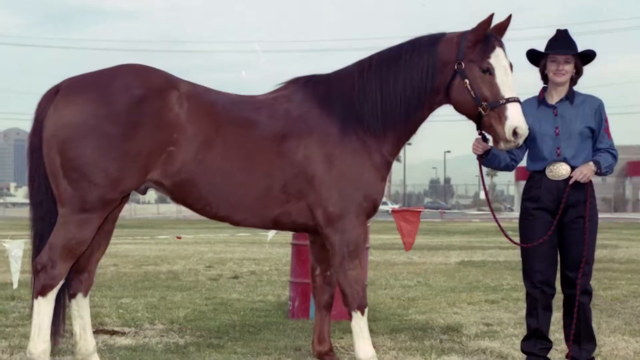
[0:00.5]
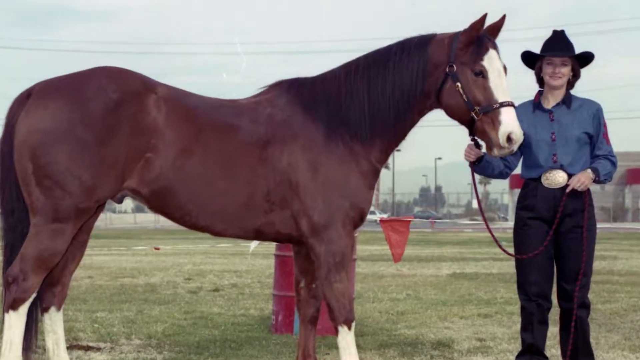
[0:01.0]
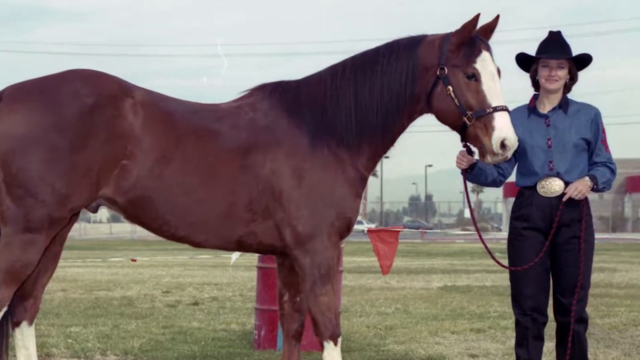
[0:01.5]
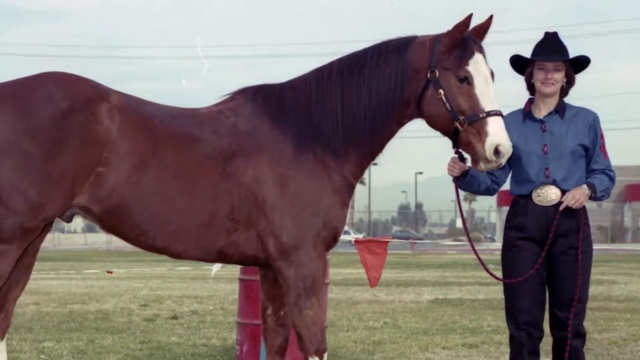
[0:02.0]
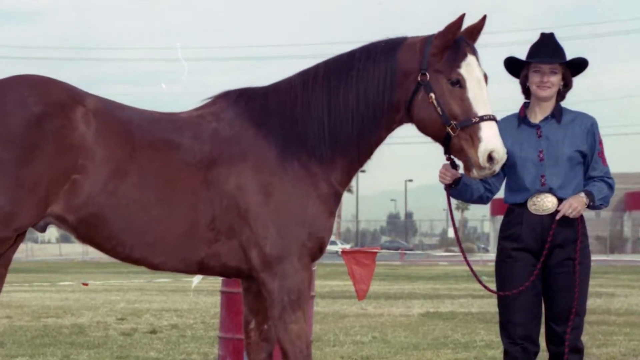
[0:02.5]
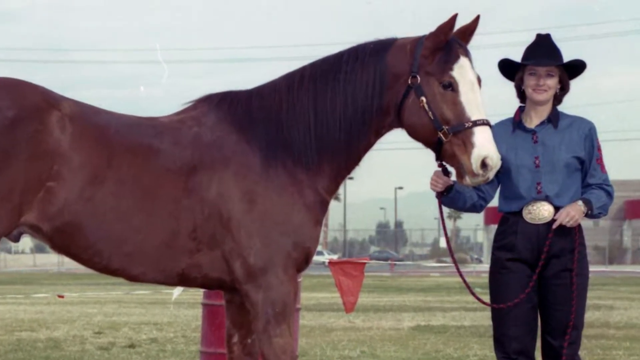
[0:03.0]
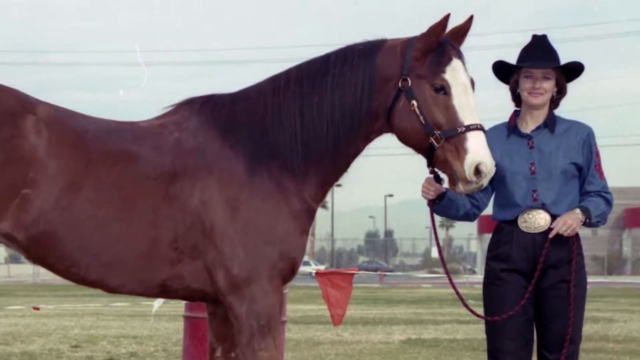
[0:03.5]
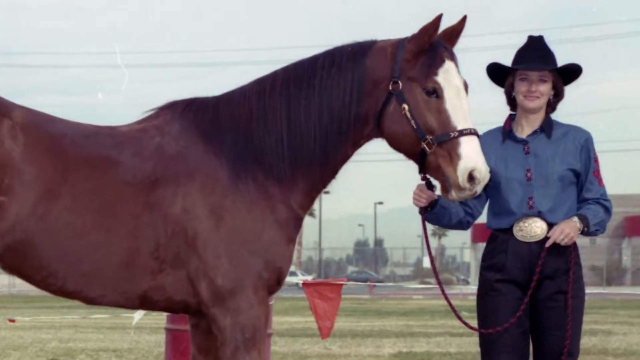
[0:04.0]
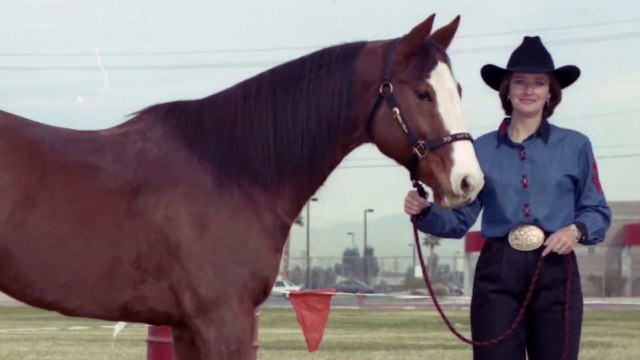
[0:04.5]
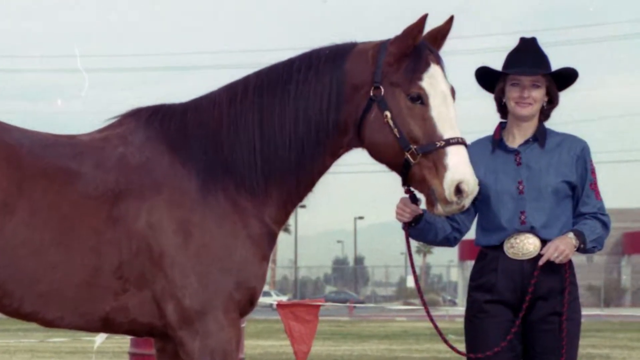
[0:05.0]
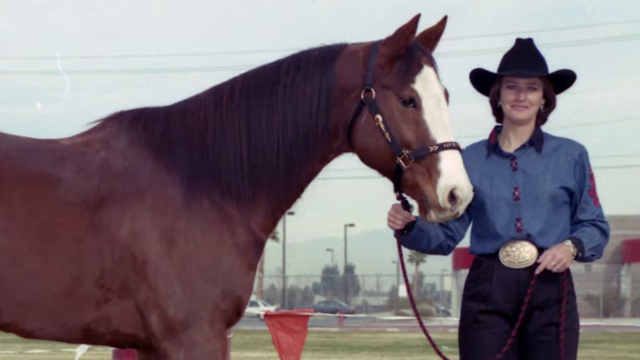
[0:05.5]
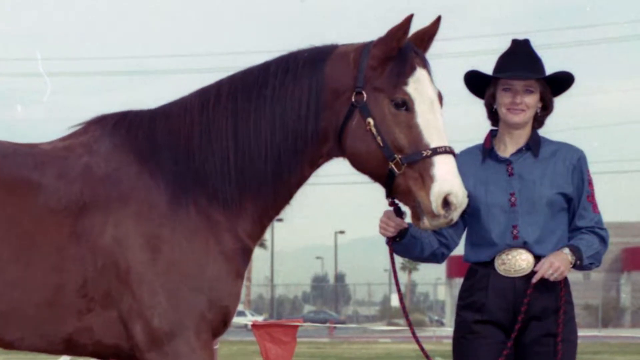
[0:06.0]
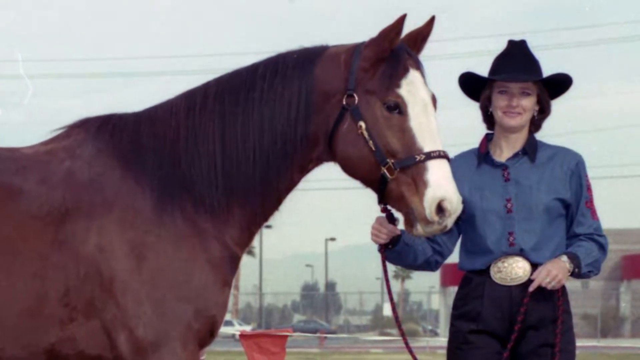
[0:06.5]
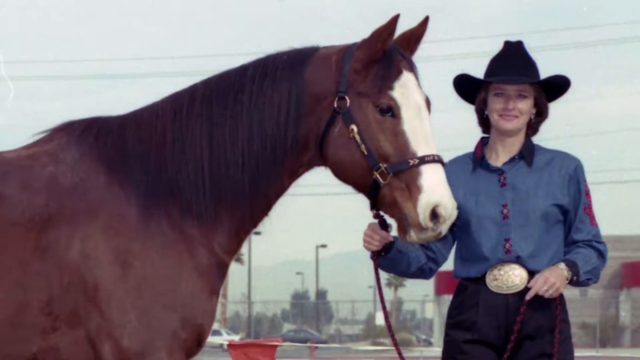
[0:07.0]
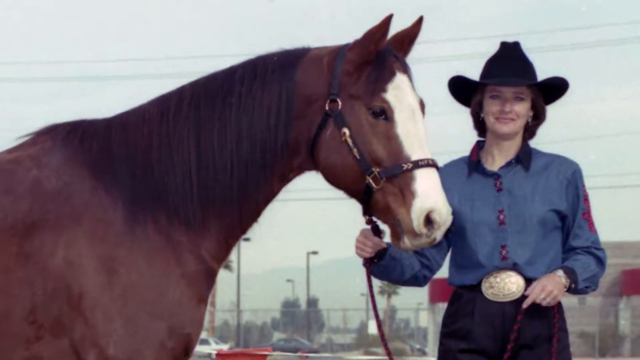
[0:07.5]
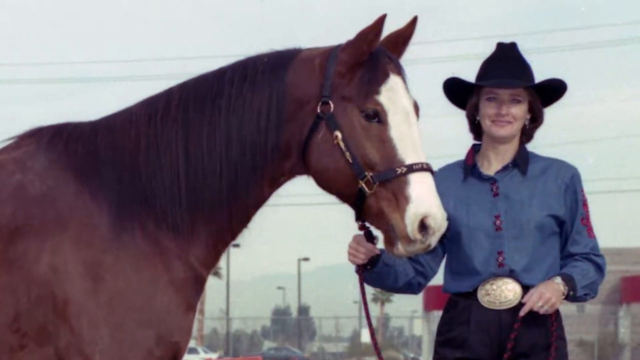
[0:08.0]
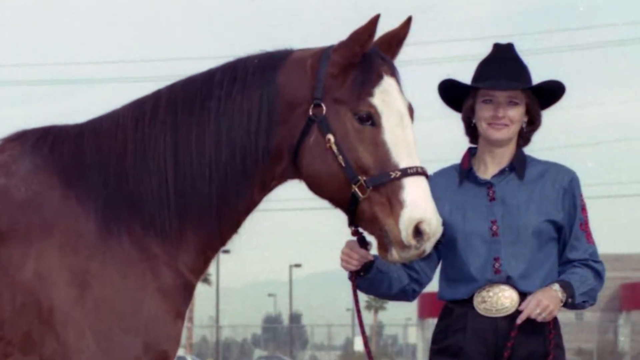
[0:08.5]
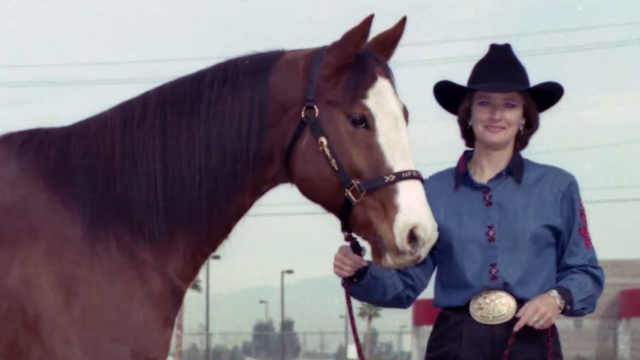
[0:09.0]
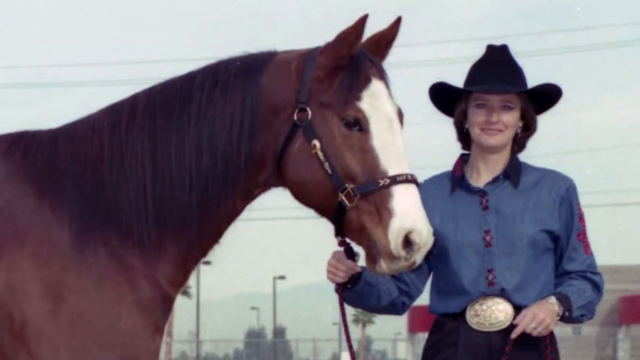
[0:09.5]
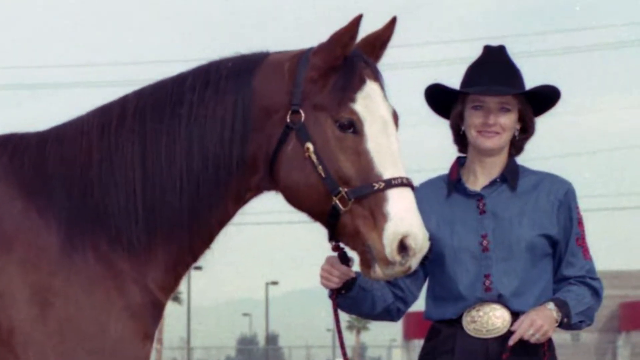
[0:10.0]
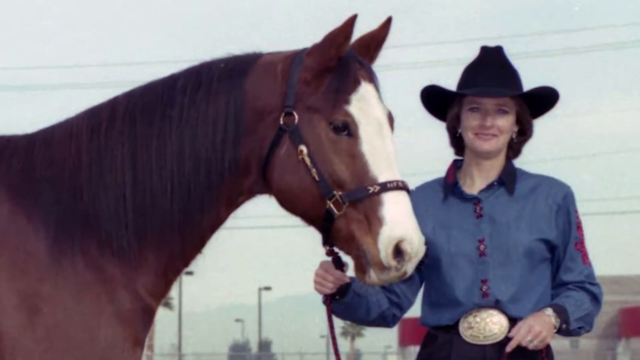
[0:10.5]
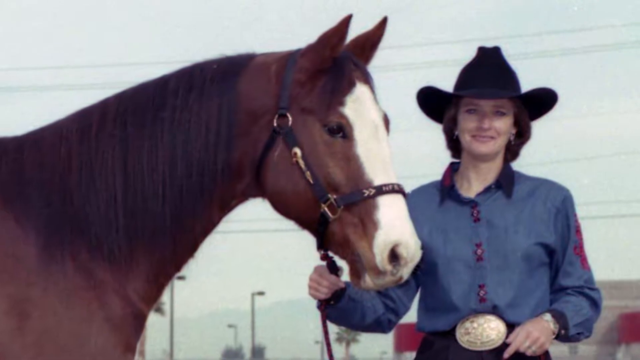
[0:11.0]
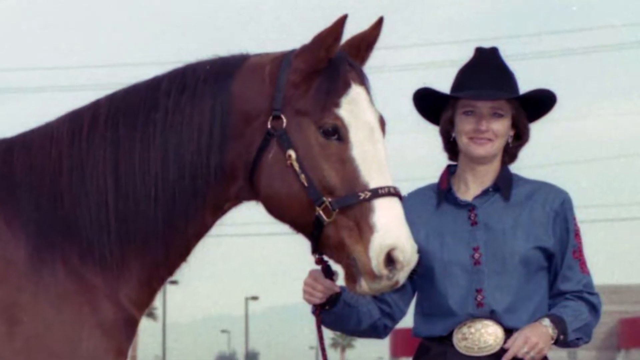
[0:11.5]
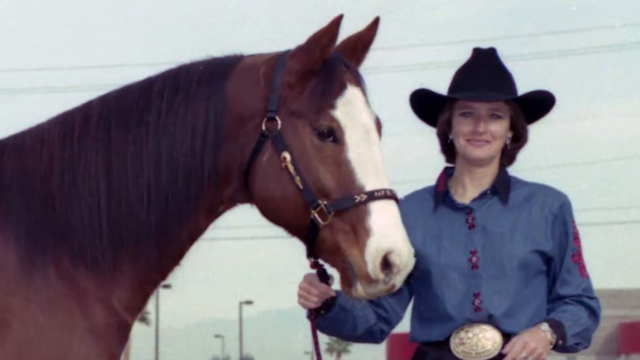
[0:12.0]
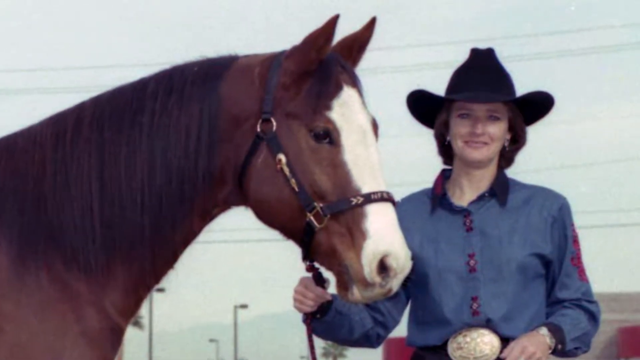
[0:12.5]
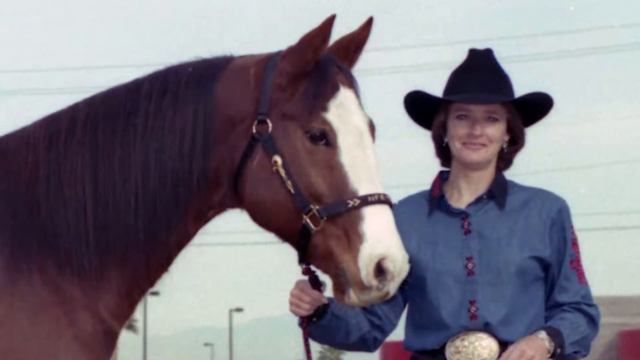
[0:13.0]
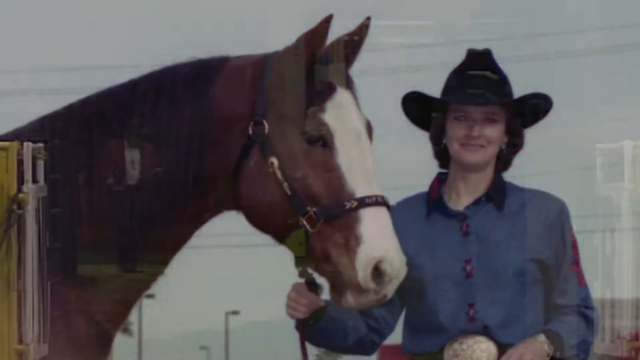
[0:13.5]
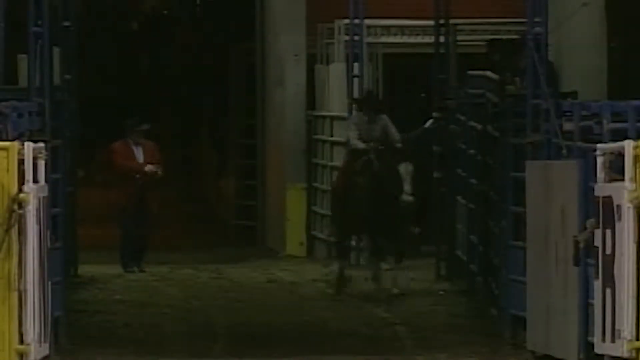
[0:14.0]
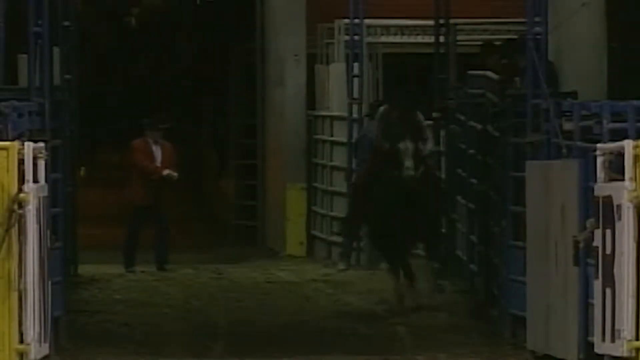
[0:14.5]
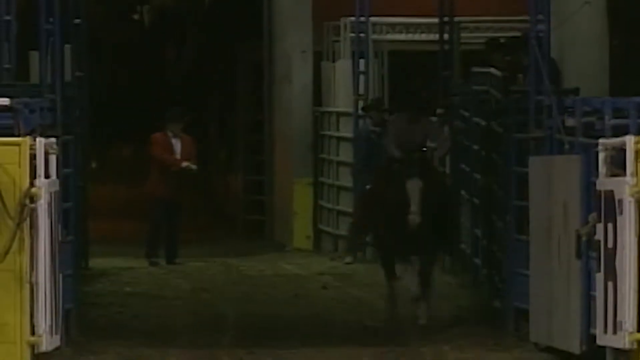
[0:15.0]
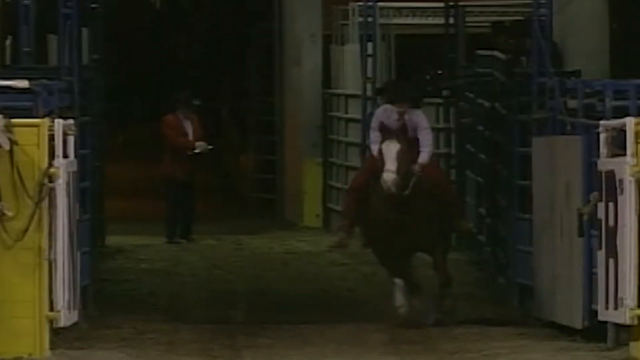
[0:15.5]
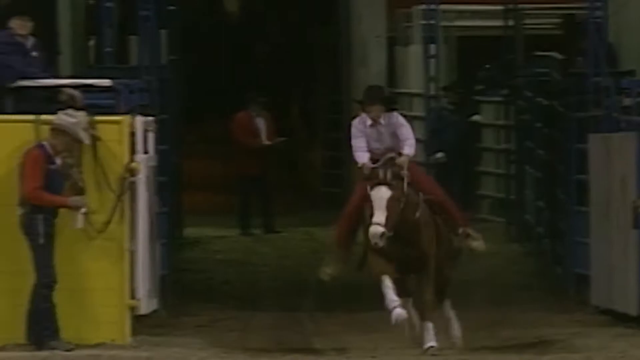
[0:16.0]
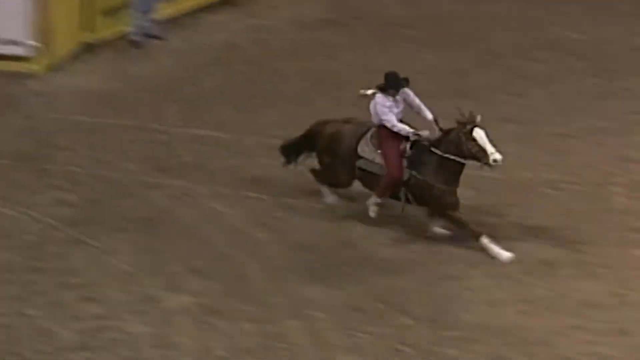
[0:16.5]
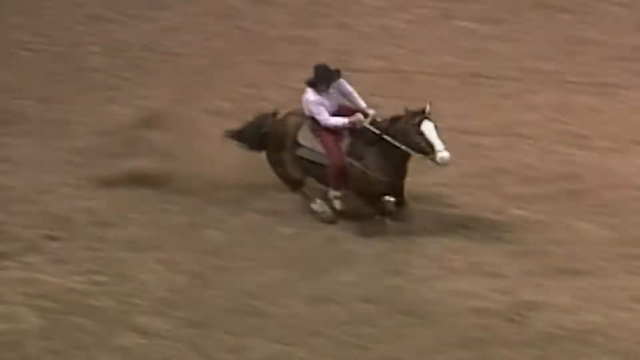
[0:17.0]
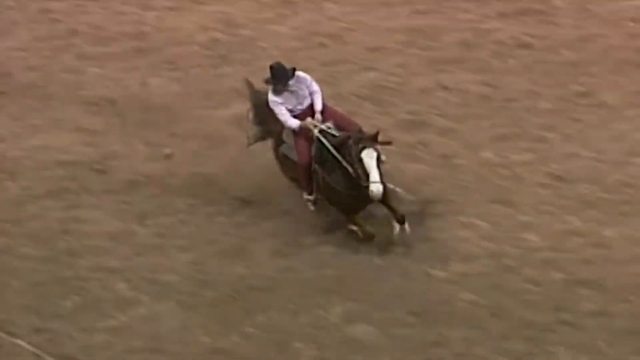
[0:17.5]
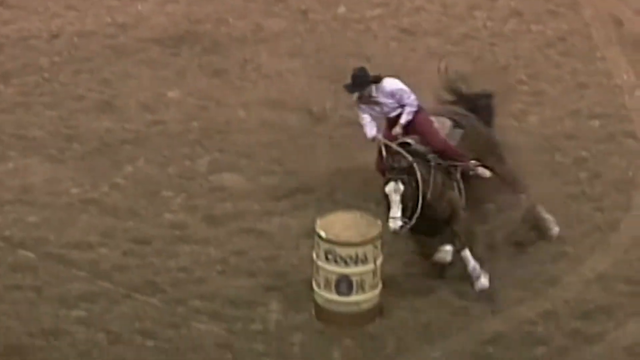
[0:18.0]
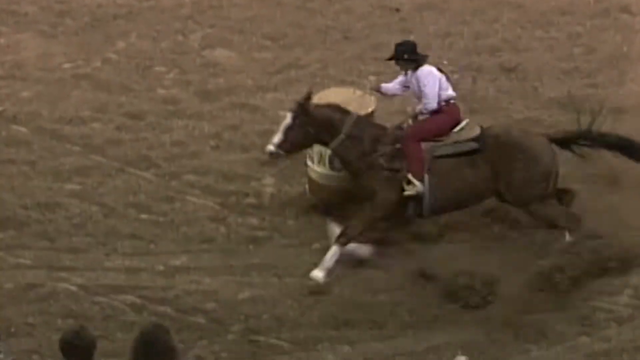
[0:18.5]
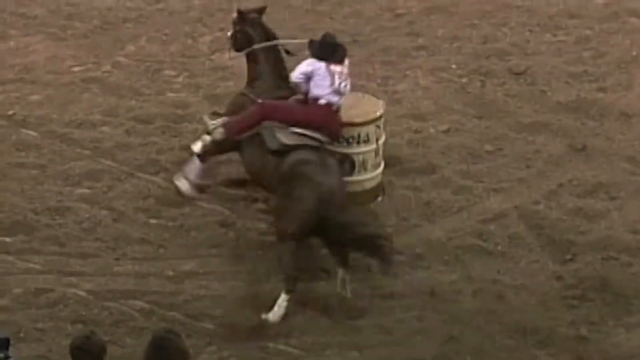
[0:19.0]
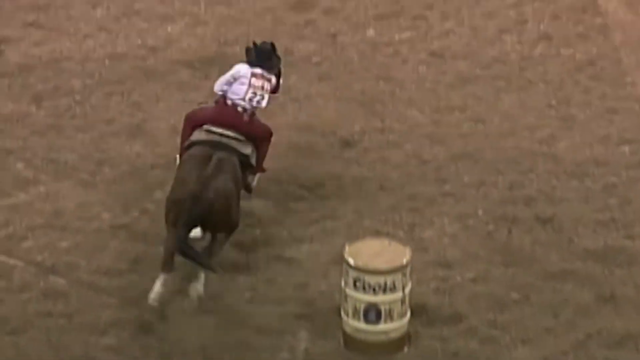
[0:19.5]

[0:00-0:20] The video opens on a picture of a brown horse standing next to a woman who looks to be in her early 20s, dressed in cowboy clothes: a collared, long-sleeved blue shirt, jeans, a big belt buckle around her waist, and a black hat. She carries a rope attached to the horse, her right hand close to the horse's mouth and her left hand holding the other part of the rope. The camera zooms in slowly on the woman and the horse. The horse's face is white and it has black hair. As the zoom gets closer, the woman is seen more clearly: she seems to have earrings in both ears, has dark brown hair, is Caucasian, and is smiling in the photo. Next comes footage of a person, most likely the woman from the picture, riding a horse very quickly toward the camera. She runs through the gate into the rodeo field, wearing a light pink long-sleeved shirt, maroon pants and a black hat. From the shape of the color on its face, the horse looks like the same horse from the photo. The horse runs in fast, slows down, and goes around what looks like a barrel of beer with the brand name Coors on it, then starts running forward.